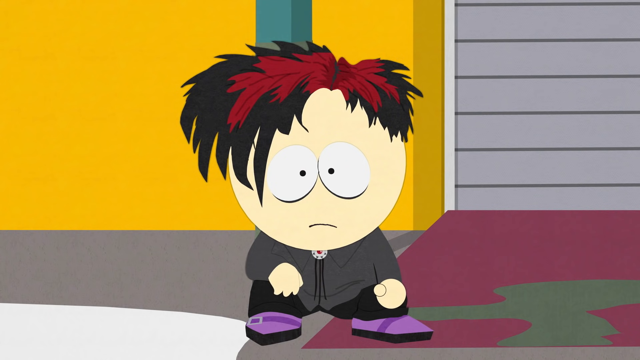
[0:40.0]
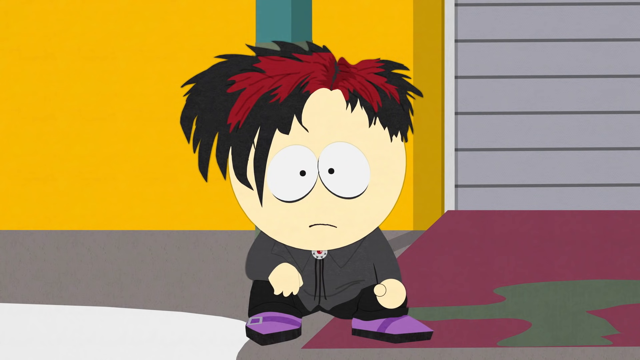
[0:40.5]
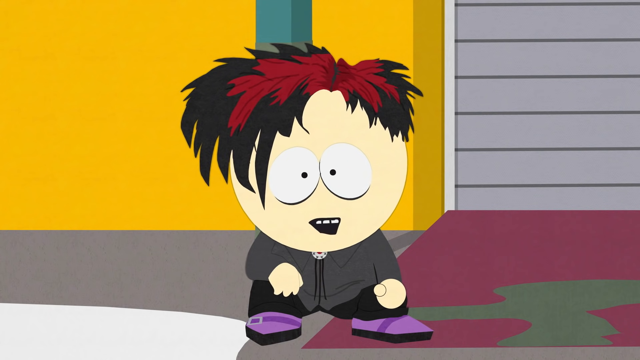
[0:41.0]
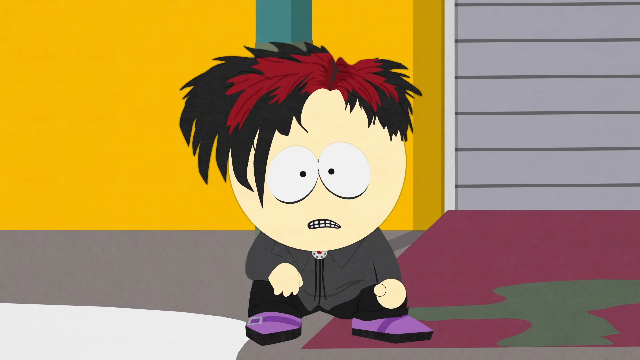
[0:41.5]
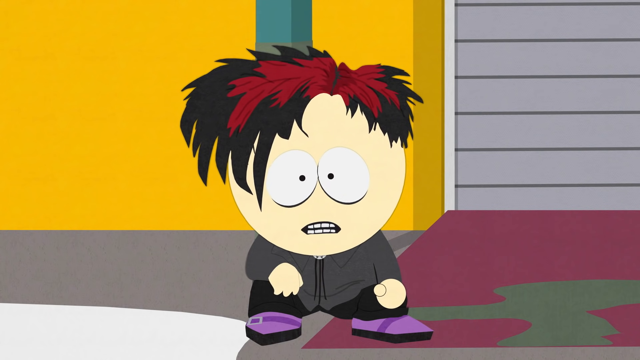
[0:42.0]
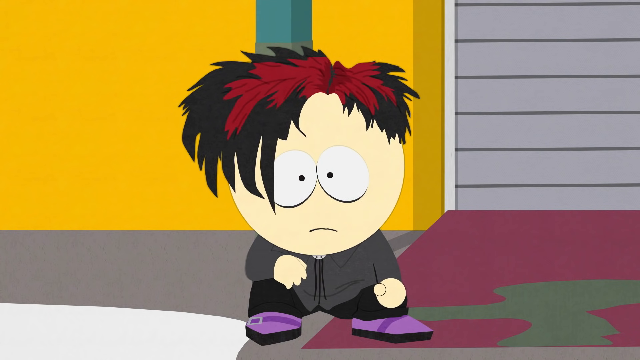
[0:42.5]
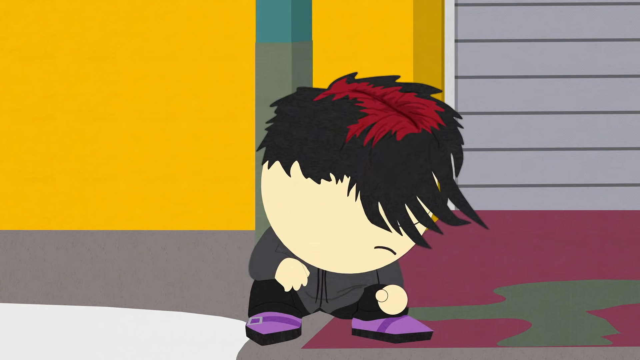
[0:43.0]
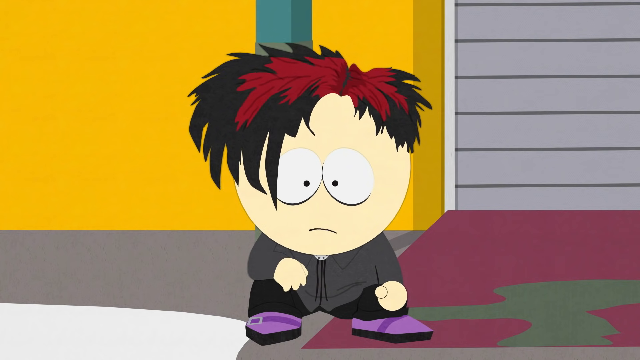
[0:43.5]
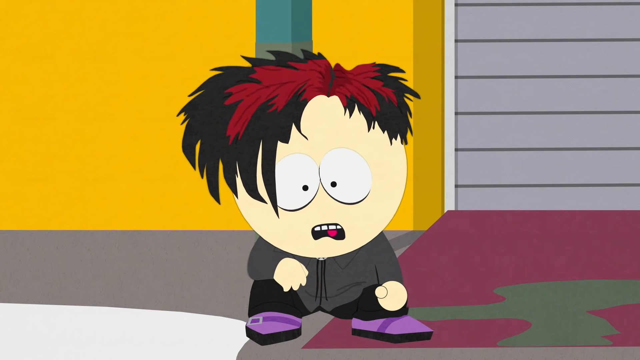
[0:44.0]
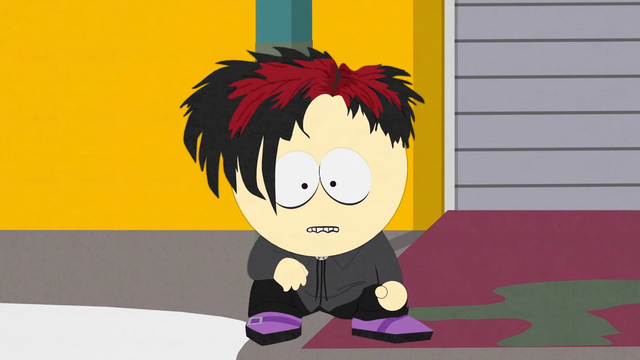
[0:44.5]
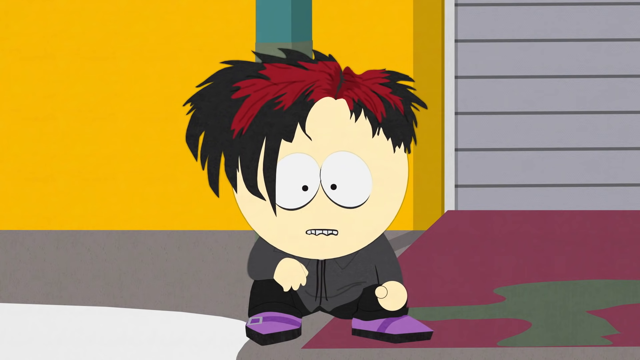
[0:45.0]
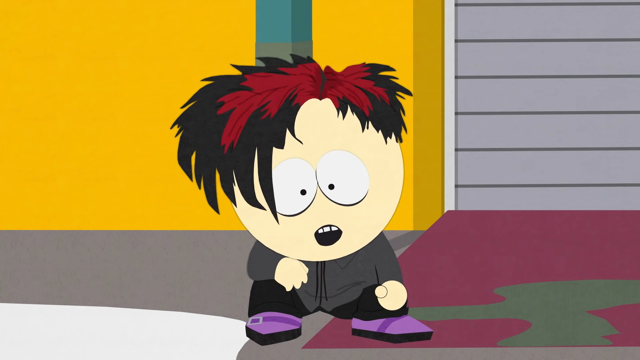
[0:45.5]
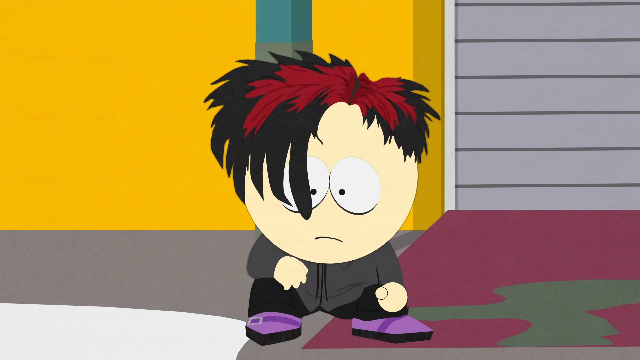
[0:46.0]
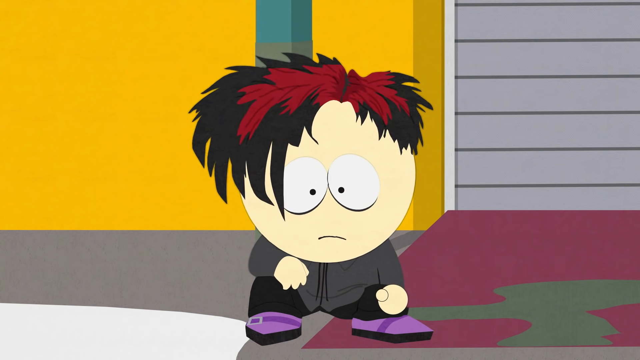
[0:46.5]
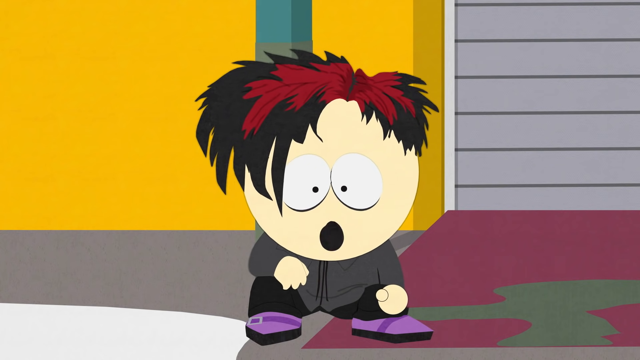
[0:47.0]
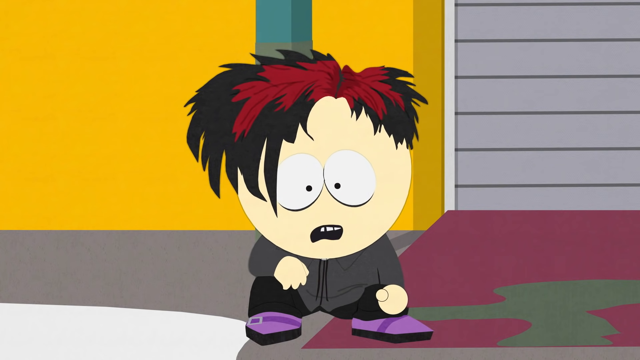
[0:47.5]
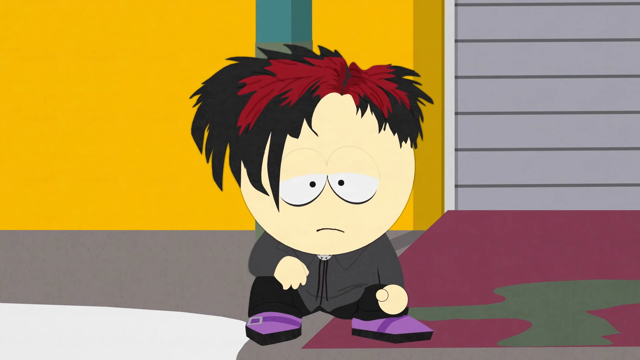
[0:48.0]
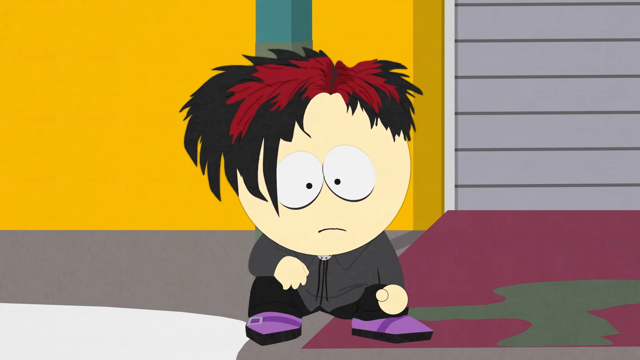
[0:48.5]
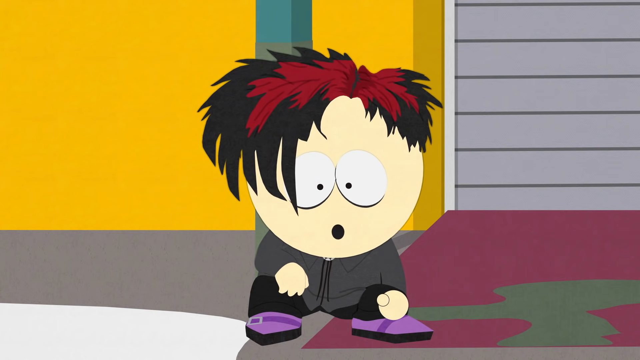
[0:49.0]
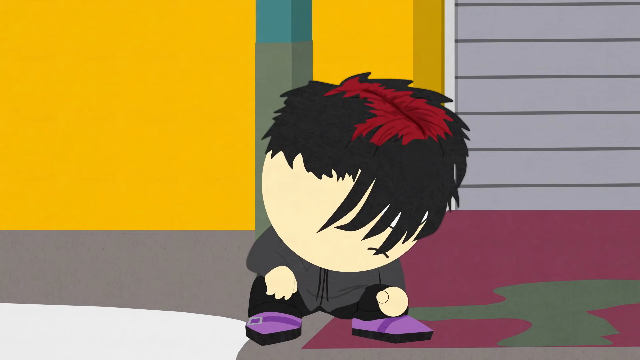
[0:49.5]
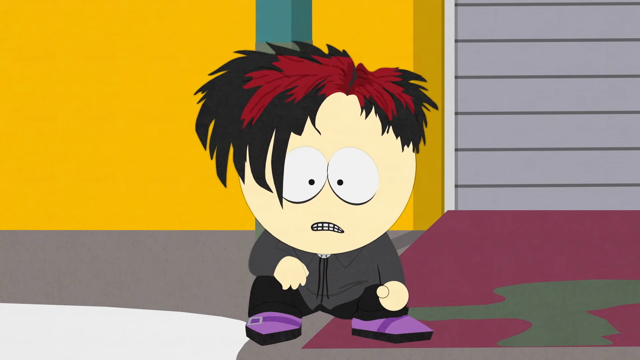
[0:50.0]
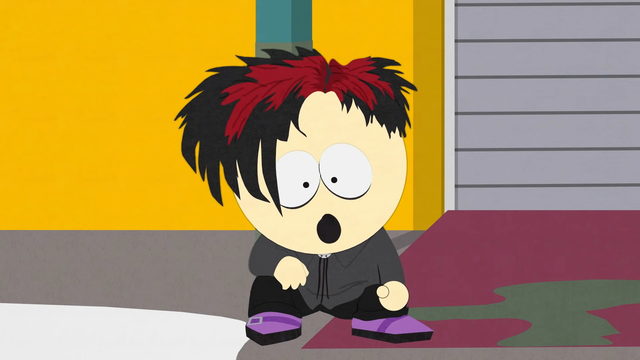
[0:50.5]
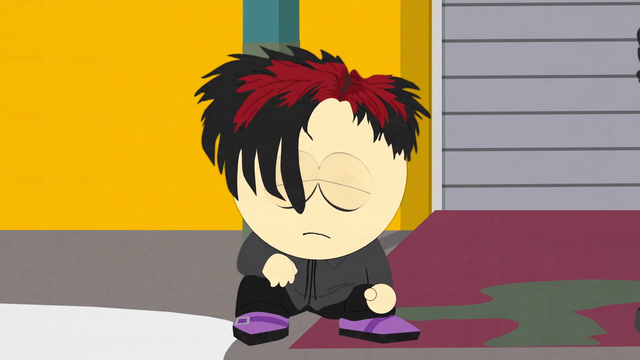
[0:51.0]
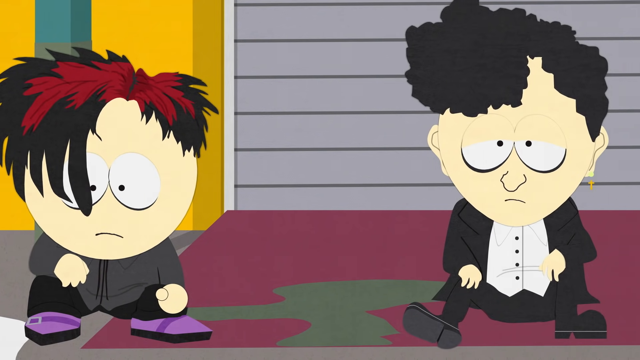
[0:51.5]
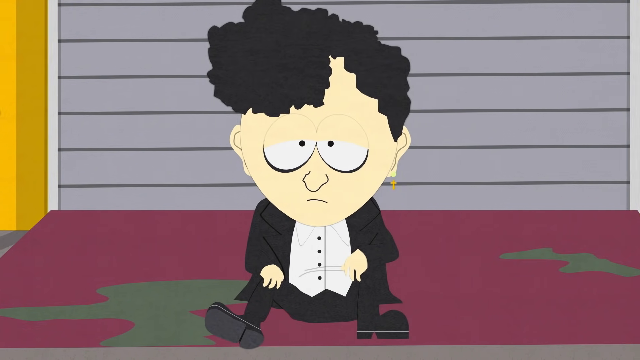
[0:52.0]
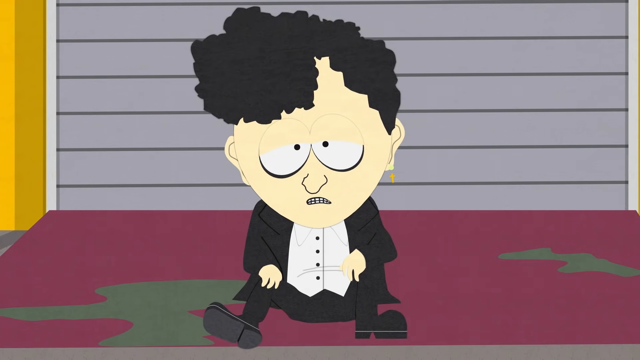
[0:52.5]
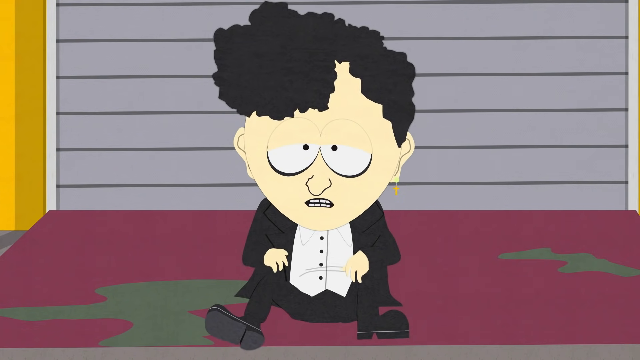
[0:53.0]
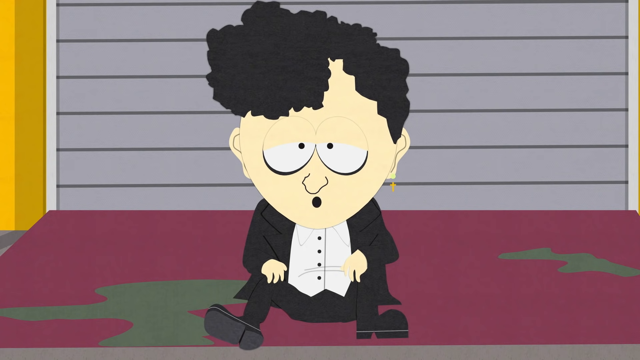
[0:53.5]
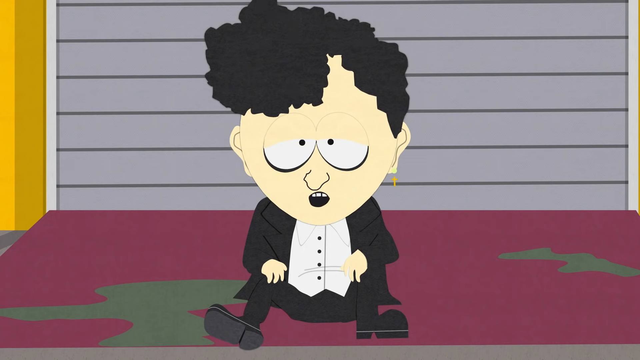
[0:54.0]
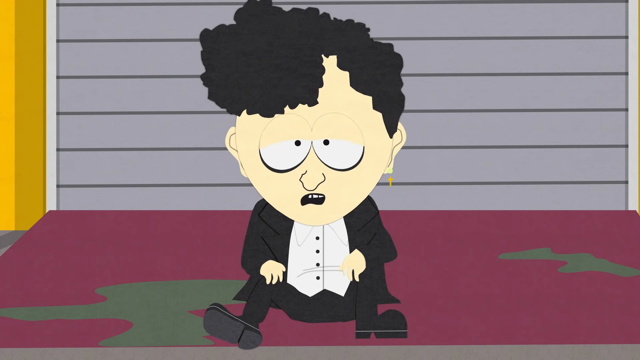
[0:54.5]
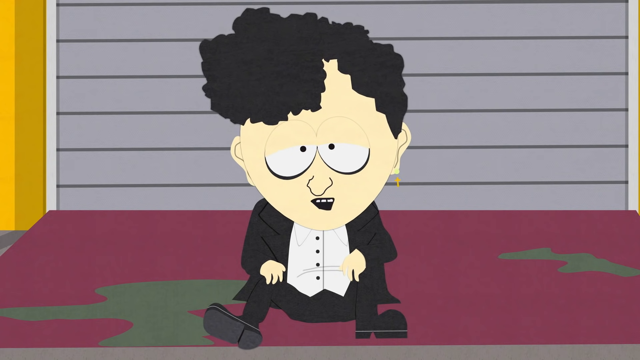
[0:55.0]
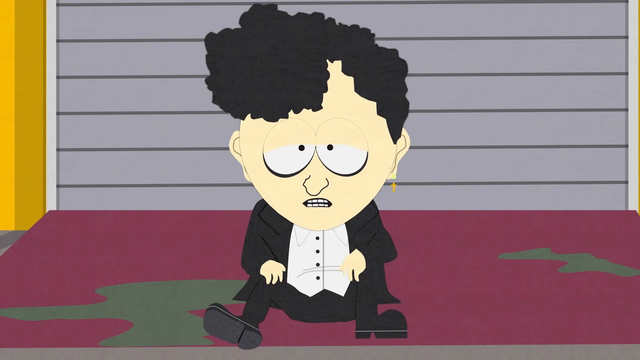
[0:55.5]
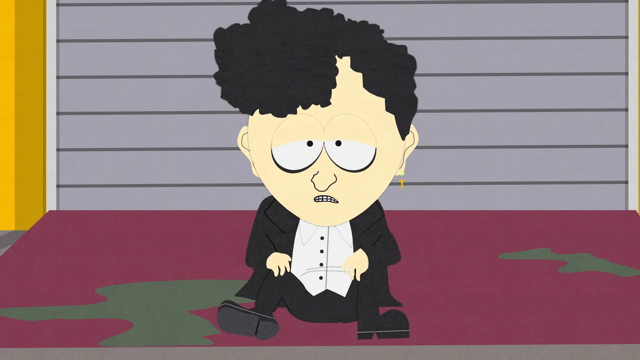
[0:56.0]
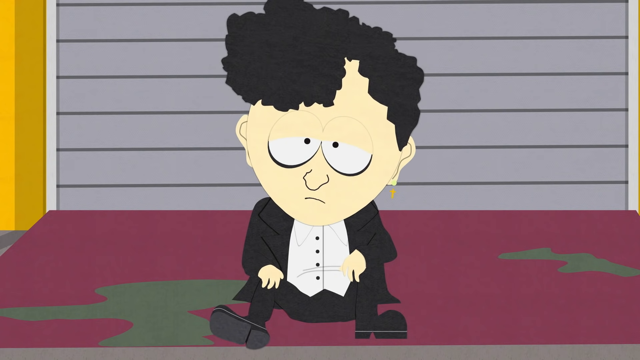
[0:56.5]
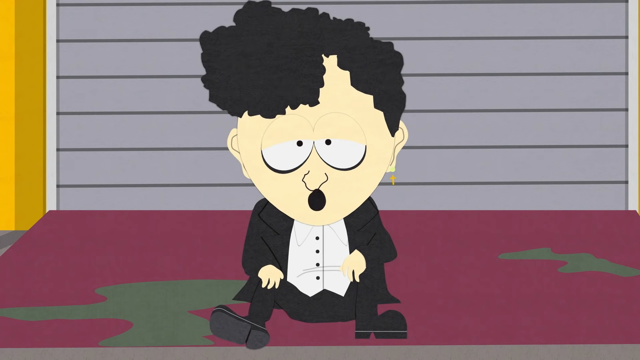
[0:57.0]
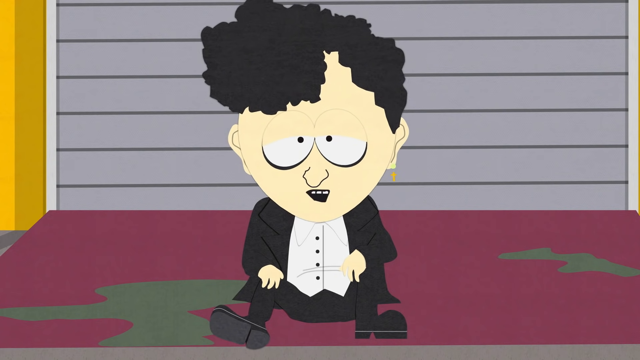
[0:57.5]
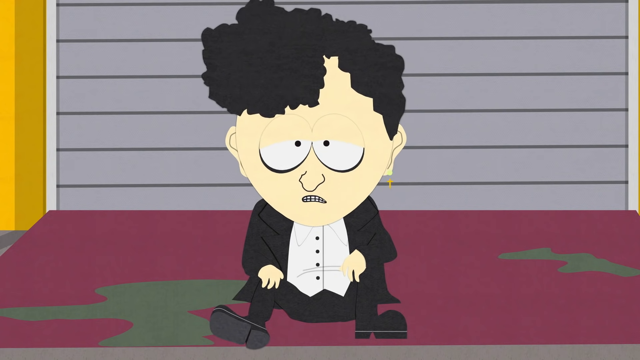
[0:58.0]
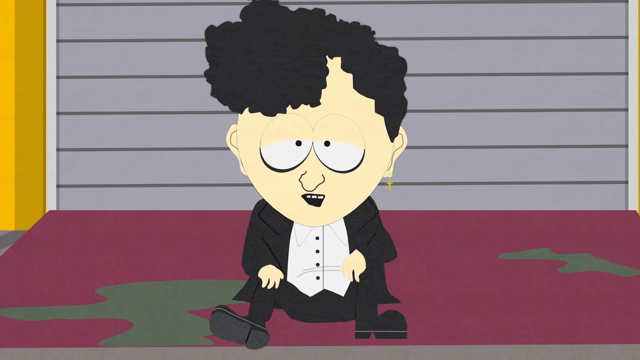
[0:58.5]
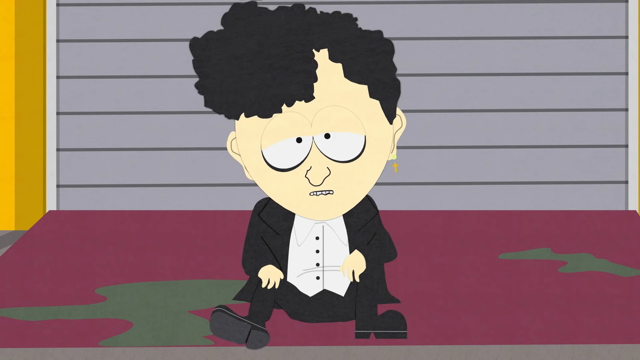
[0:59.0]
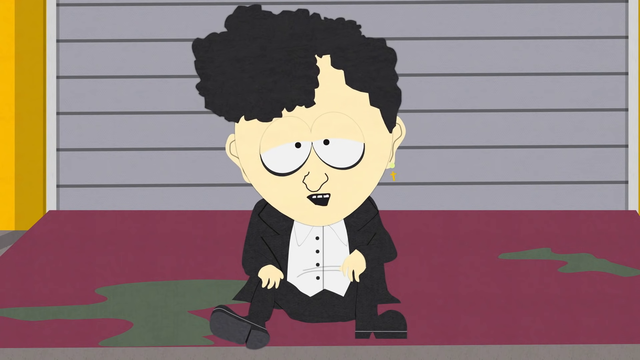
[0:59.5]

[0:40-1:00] The goth kid is sitting in front of his house, apparently on the curb. His hair is dyed red, a mixture of red and black. He wears purple shoes, seemingly a gray sweater possibly with a lapel, and black pants, and he has dark circles under his eyes. He kind of swishes his hair to the side because it keeps getting in his face, and he keeps doing this the whole time he is talking. The leader of the goths has sort of curly hair and bags under his eyes; he wears a dark trench coat, a button-up white shirt, and a cross earring. They appear to be having a talk about something.